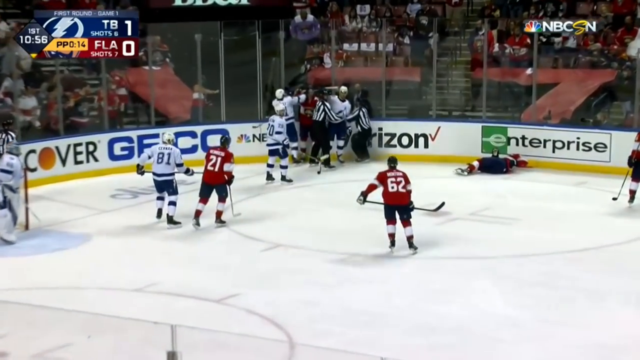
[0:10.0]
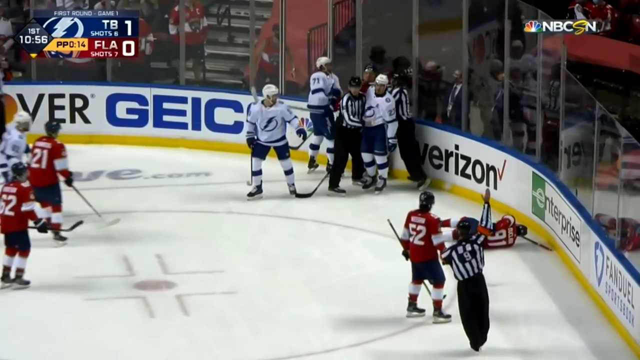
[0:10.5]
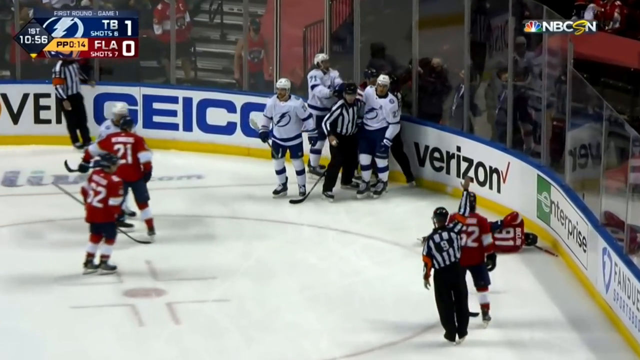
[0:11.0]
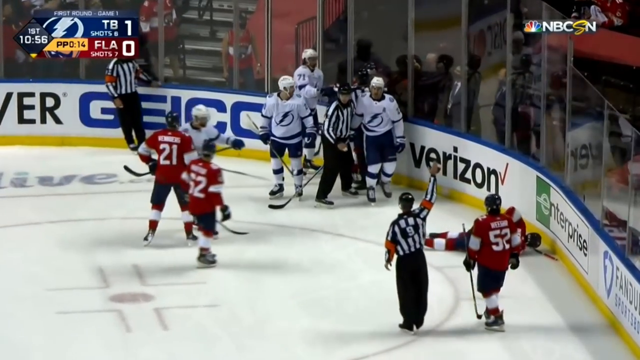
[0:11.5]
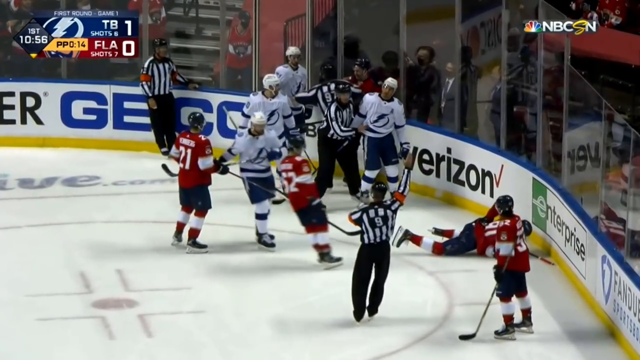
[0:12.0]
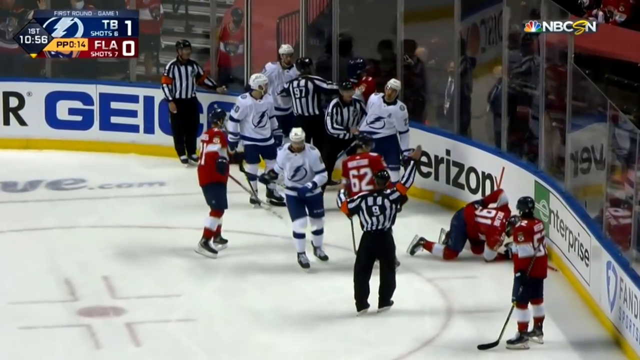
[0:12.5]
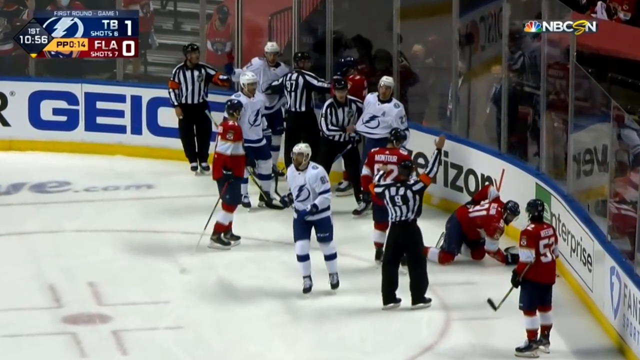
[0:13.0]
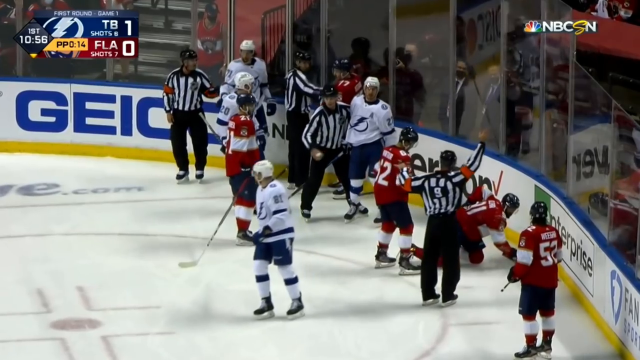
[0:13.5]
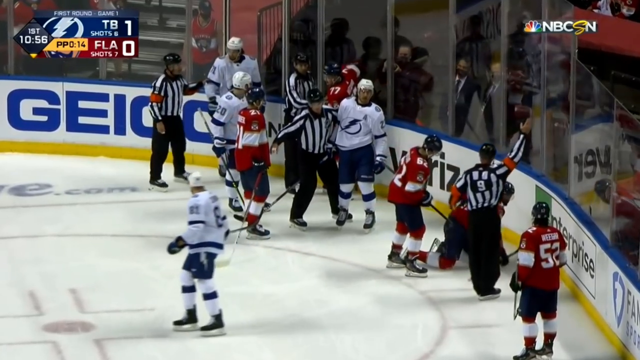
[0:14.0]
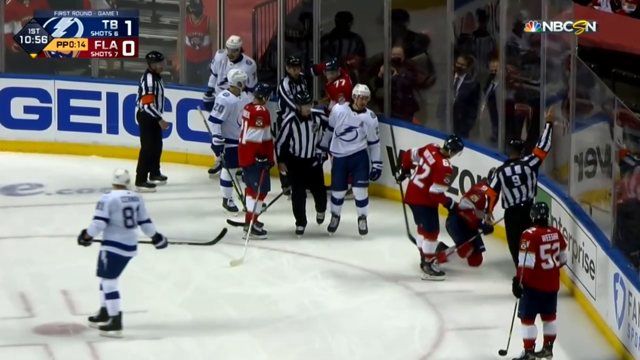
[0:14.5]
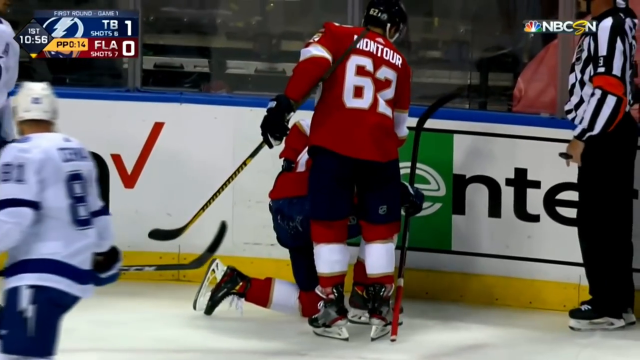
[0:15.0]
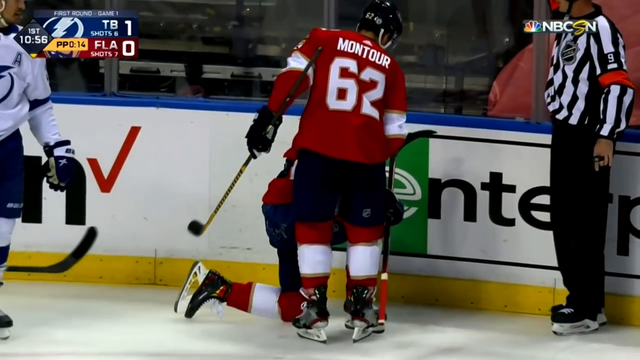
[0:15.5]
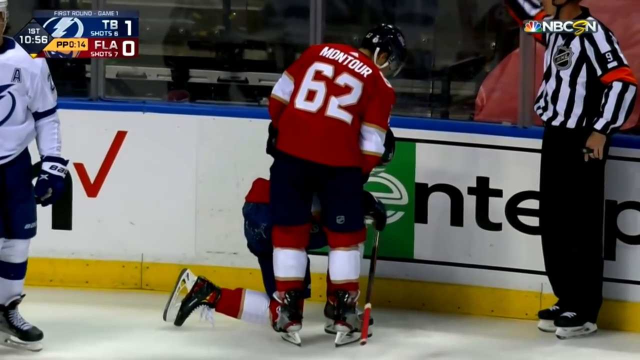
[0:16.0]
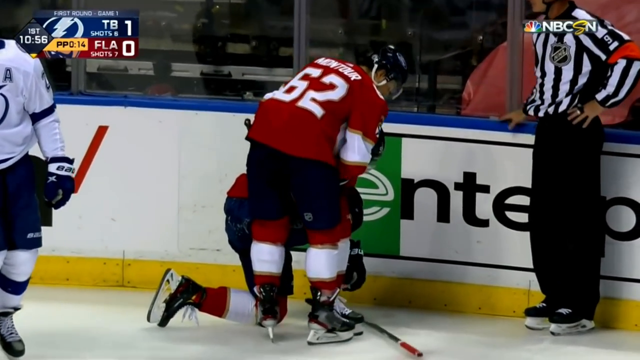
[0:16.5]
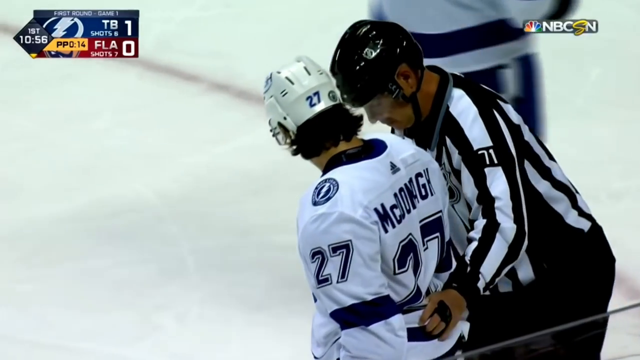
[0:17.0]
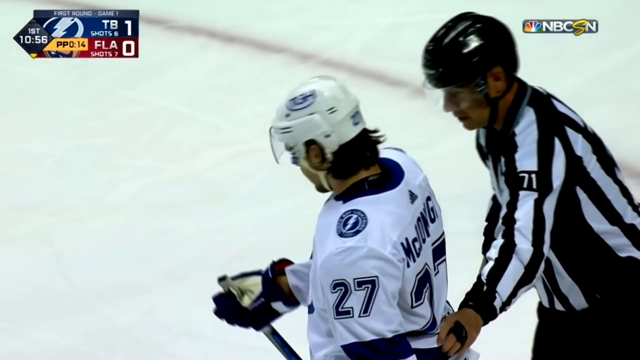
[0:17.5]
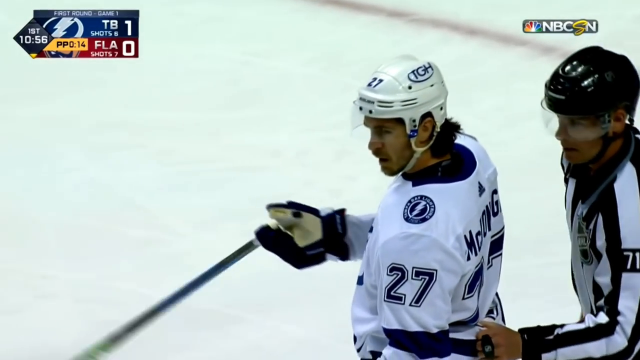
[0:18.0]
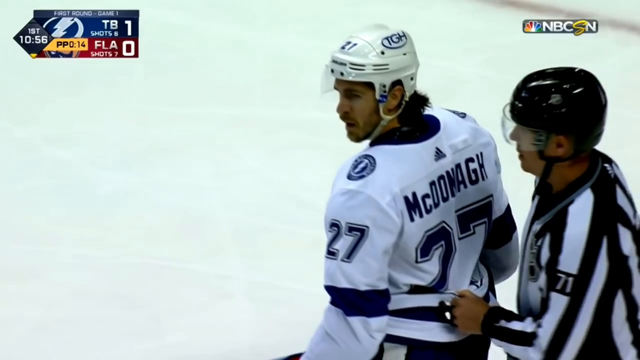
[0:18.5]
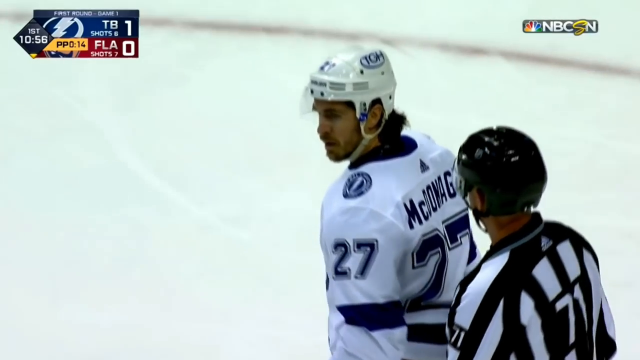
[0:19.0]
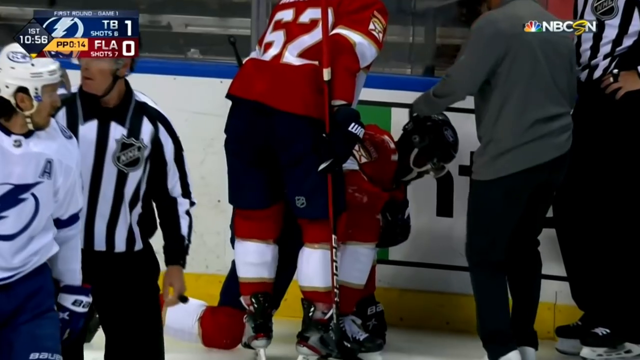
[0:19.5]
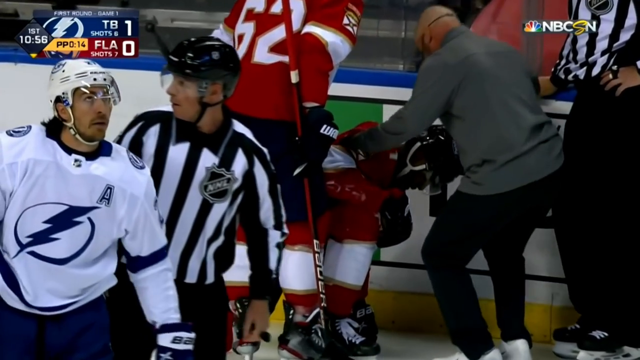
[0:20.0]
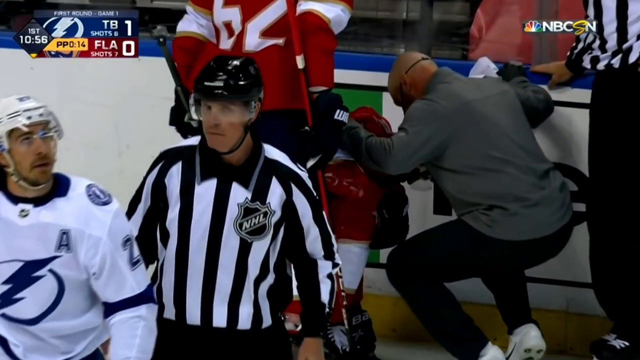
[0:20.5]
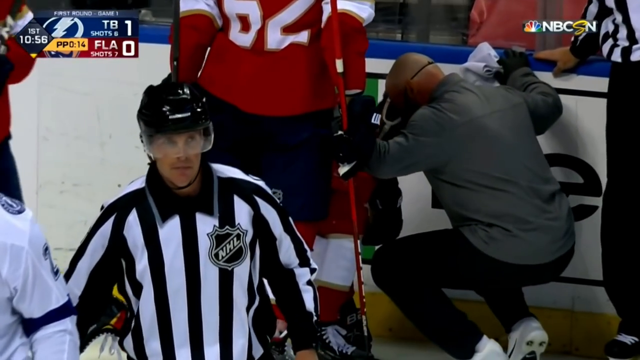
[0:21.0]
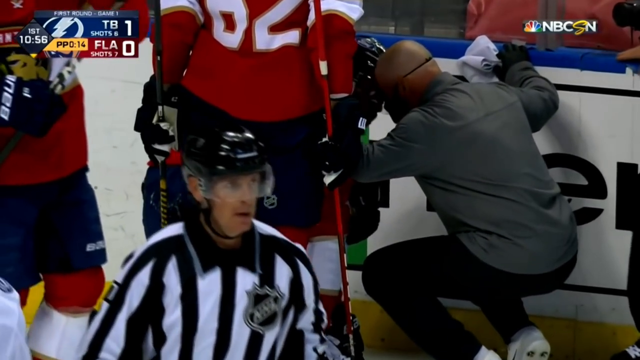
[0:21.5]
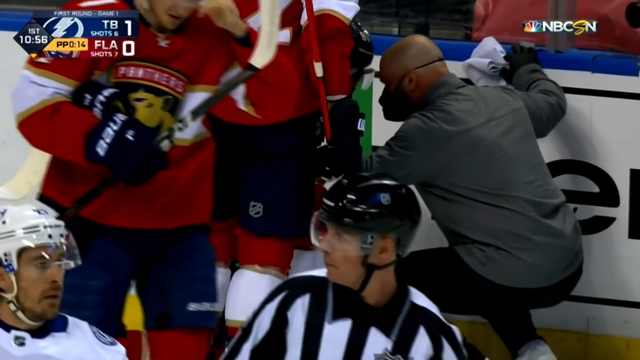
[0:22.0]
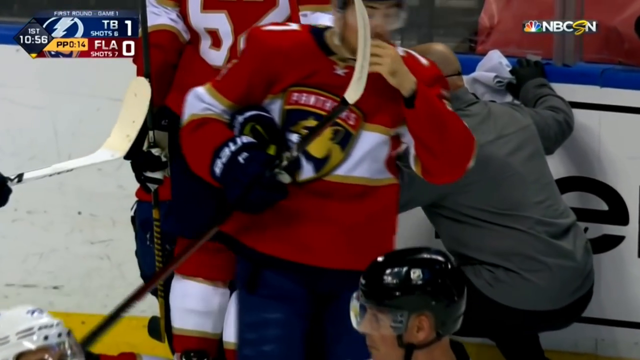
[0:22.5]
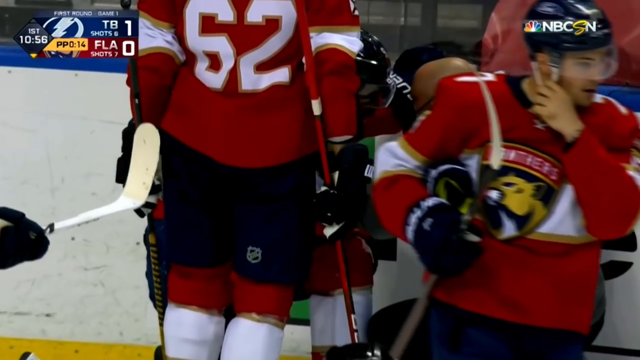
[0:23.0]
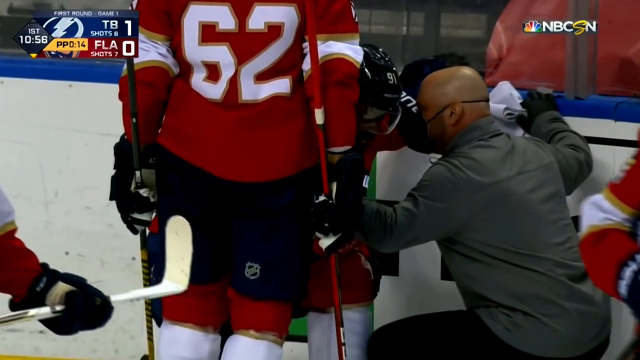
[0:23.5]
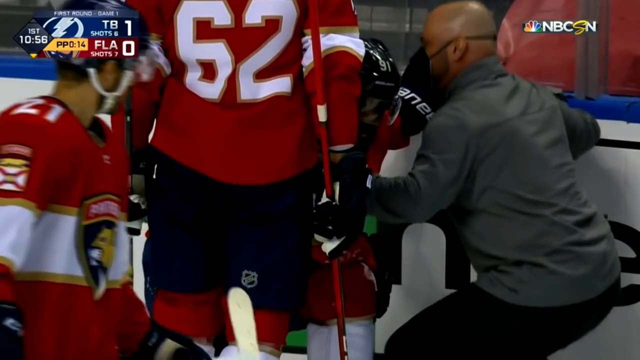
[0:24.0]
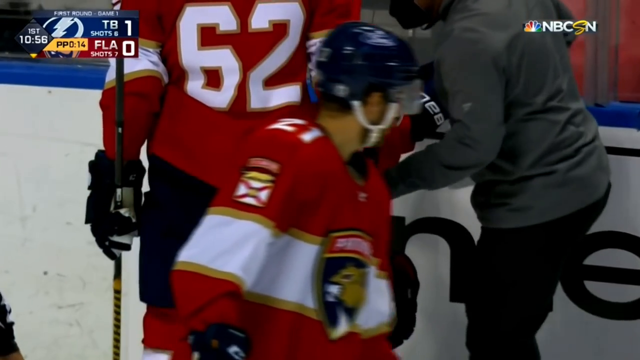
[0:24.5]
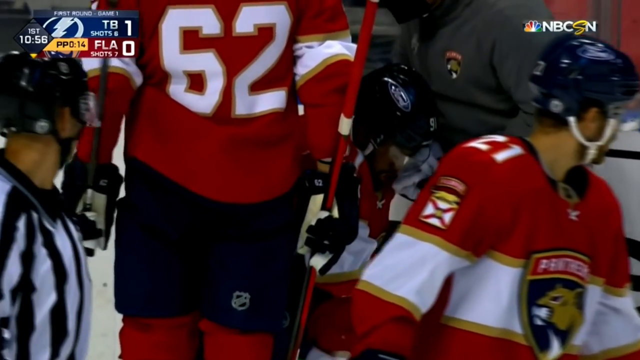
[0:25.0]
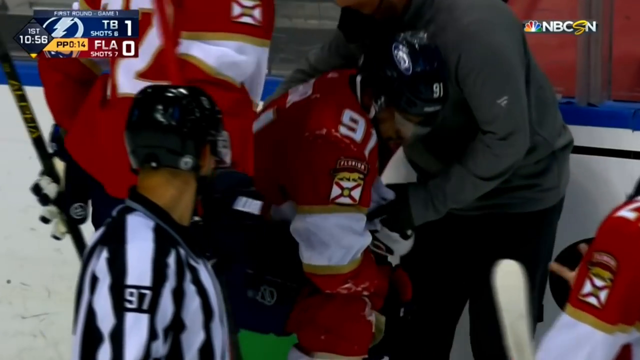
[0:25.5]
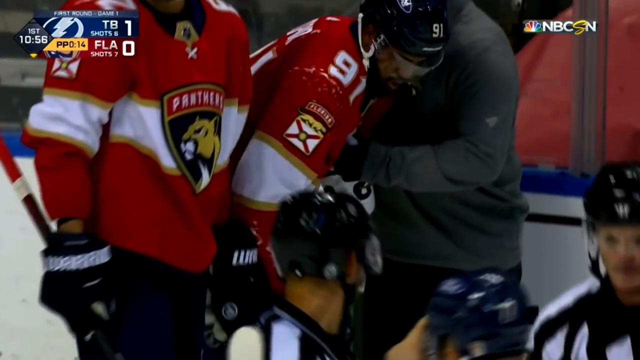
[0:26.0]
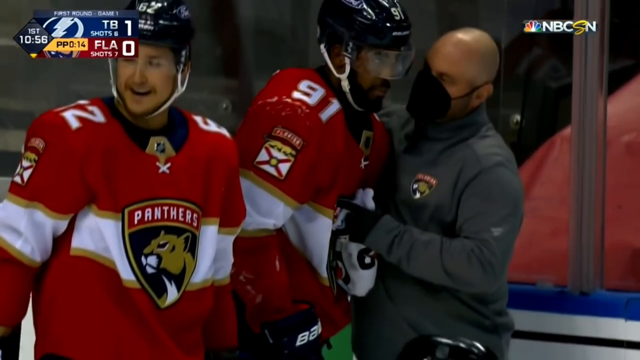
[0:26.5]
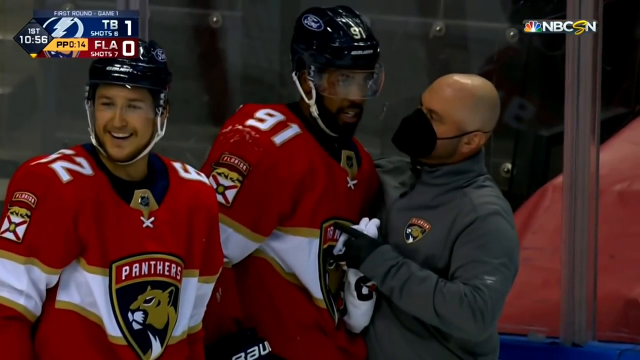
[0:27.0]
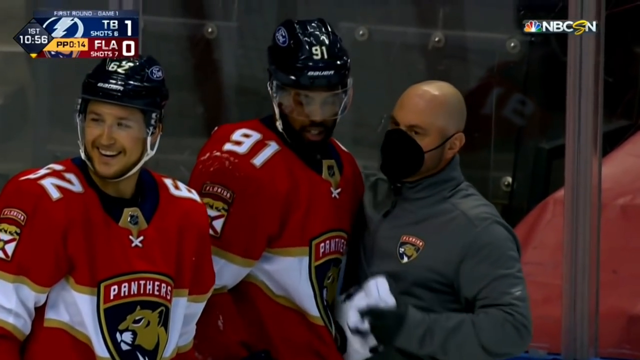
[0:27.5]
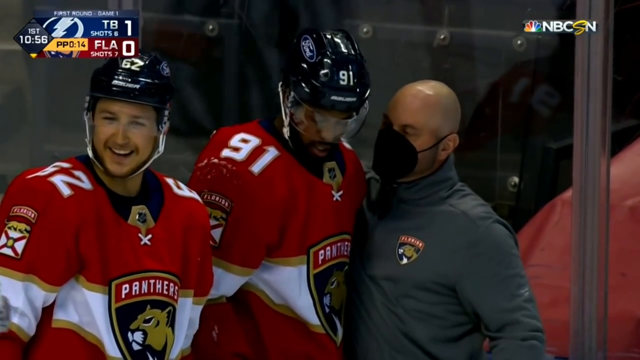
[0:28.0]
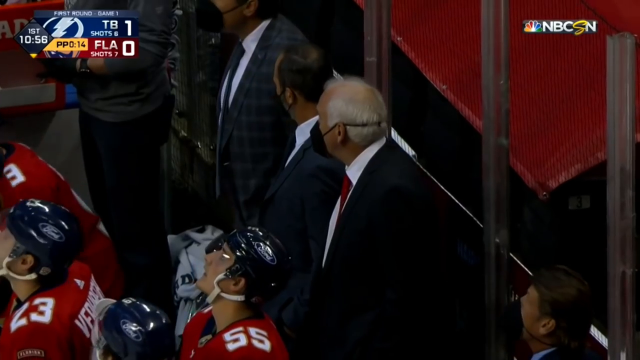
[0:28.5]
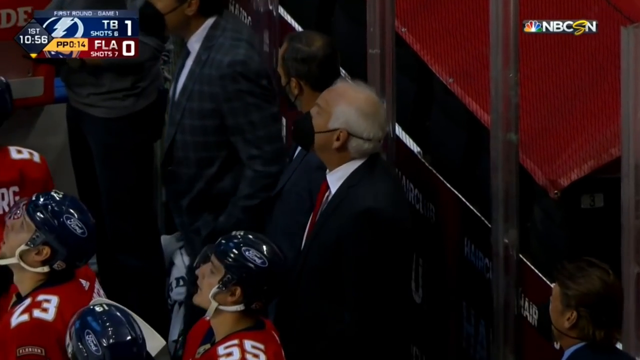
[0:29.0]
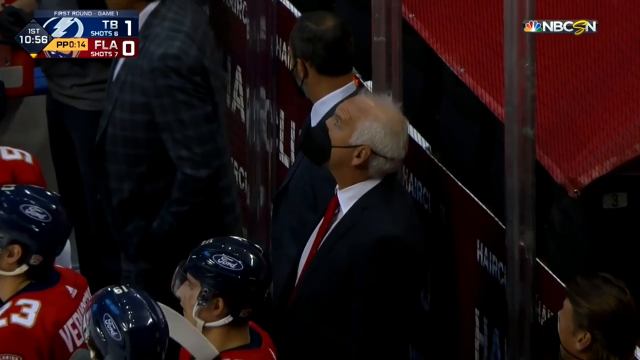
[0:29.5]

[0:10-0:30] The hockey game between Florida and TB continues, with the score still 1-0 and TB in the lead. What appears to be player number 62 heads toward what appears to be a brawl that has started. Players are sort of fighting in the corner, and the referees come around and sort of break up the fight. One of the coaches appears to come out onto the ice wearing a mask like those from the COVID era, and he tries to help one of his players. Four referees are out on the rink, and they appear to successfully break up the scuffle. One player, bent over, leans his hockey stick against the wall, and the stick falls to the ice as his coach helps him up. His face shield is visible, with a beard below it.